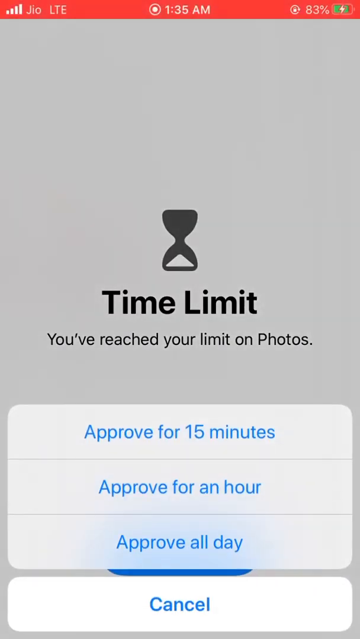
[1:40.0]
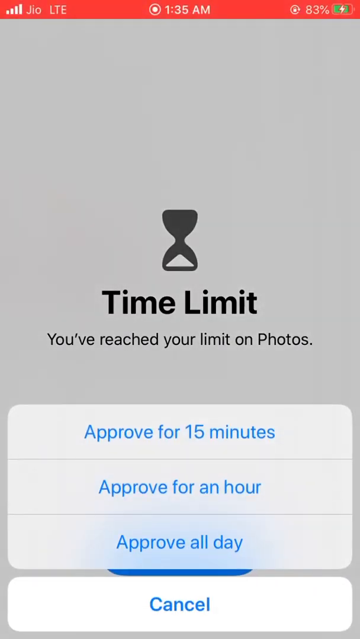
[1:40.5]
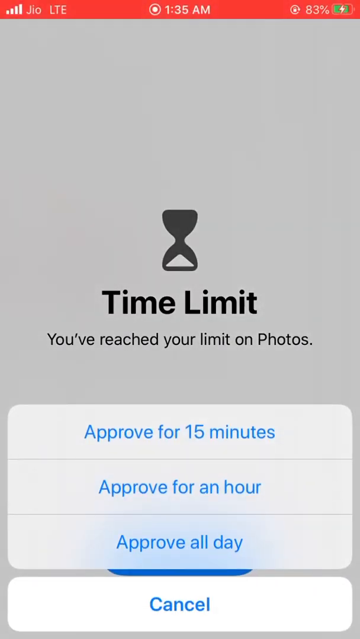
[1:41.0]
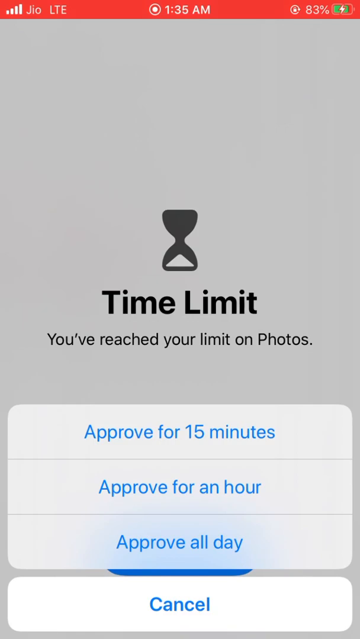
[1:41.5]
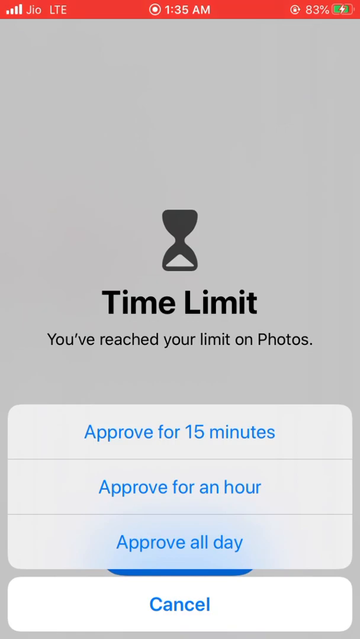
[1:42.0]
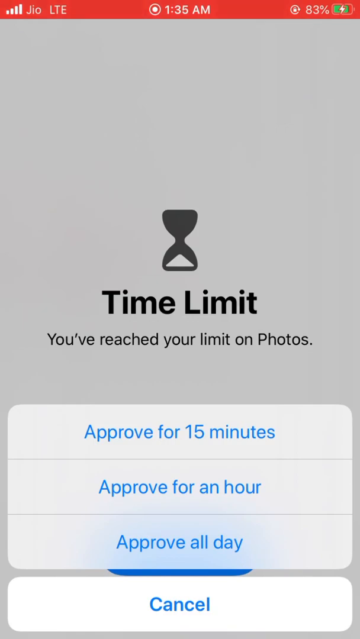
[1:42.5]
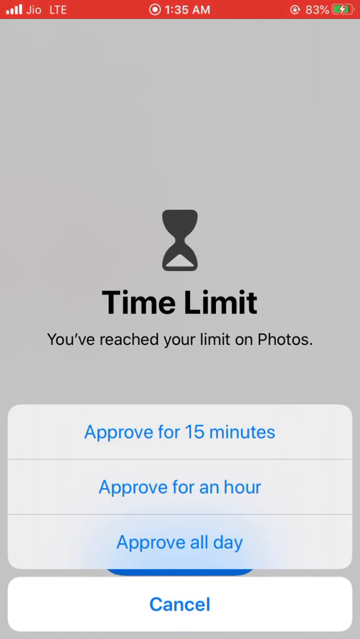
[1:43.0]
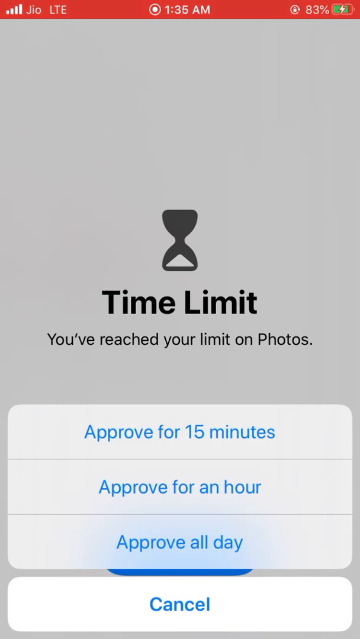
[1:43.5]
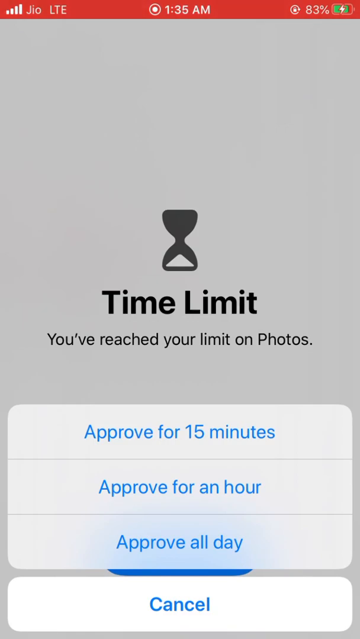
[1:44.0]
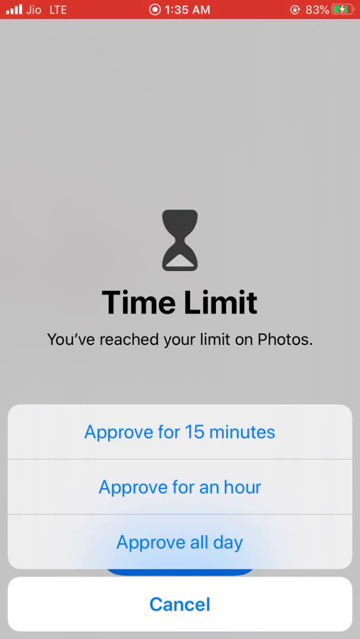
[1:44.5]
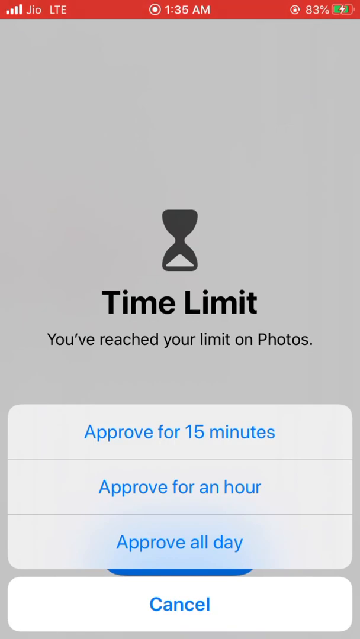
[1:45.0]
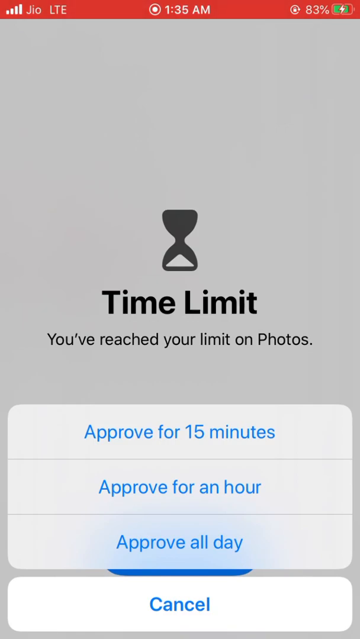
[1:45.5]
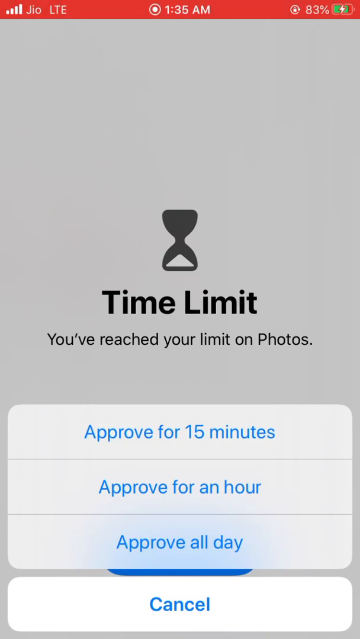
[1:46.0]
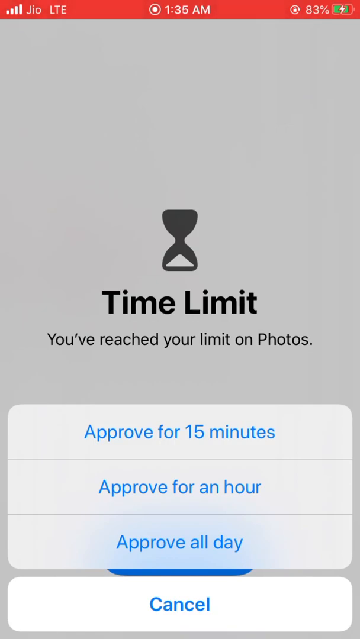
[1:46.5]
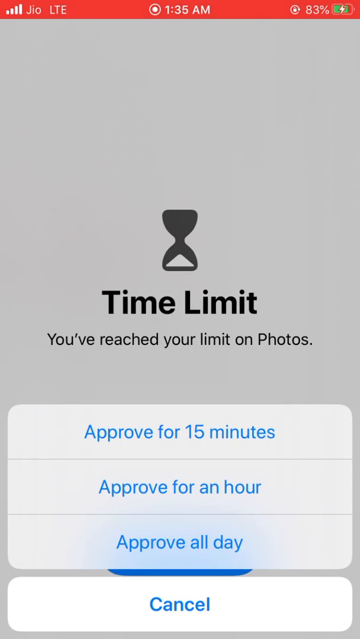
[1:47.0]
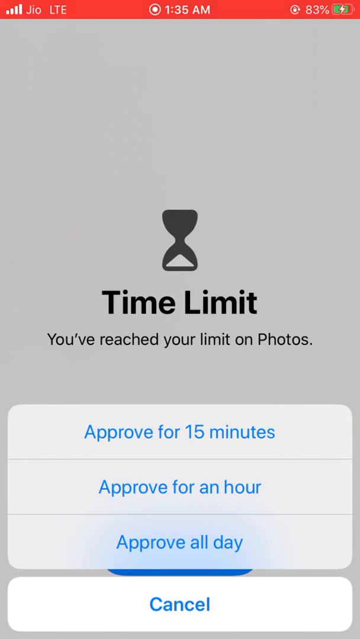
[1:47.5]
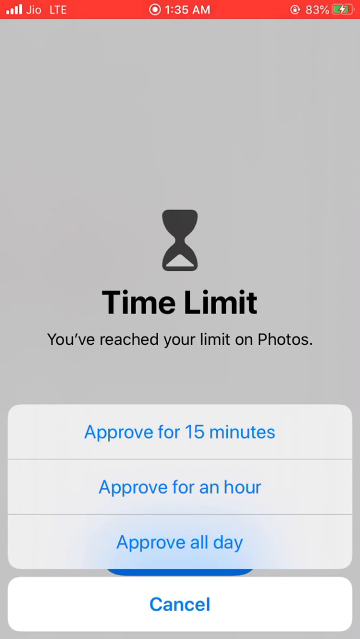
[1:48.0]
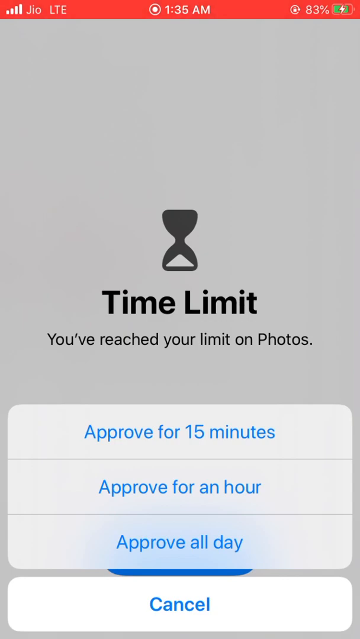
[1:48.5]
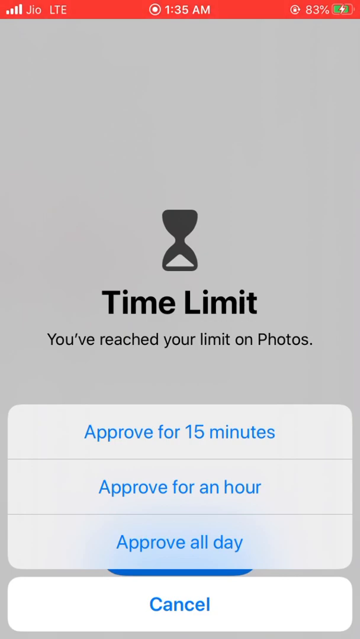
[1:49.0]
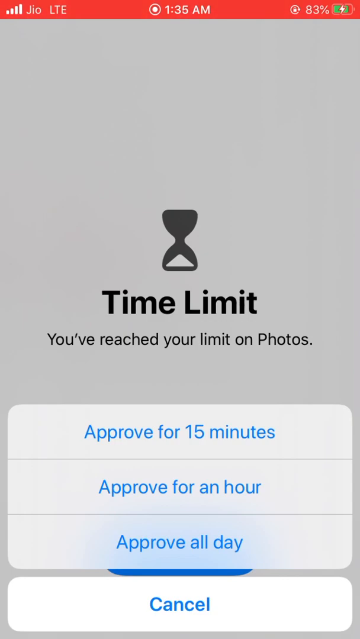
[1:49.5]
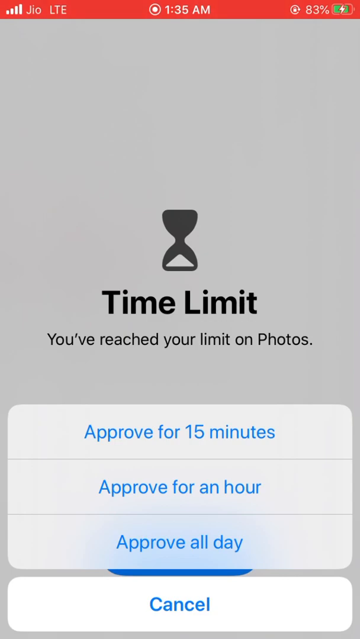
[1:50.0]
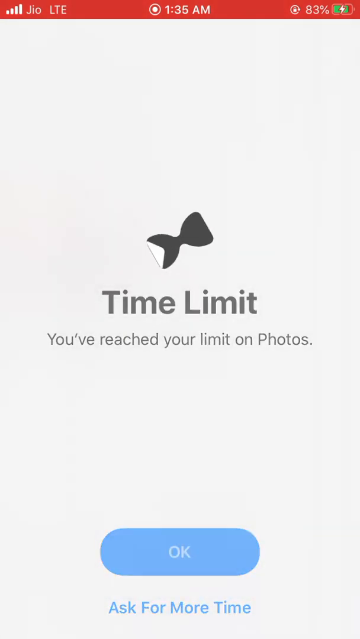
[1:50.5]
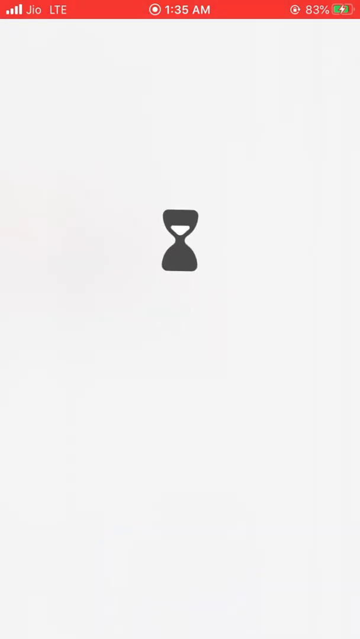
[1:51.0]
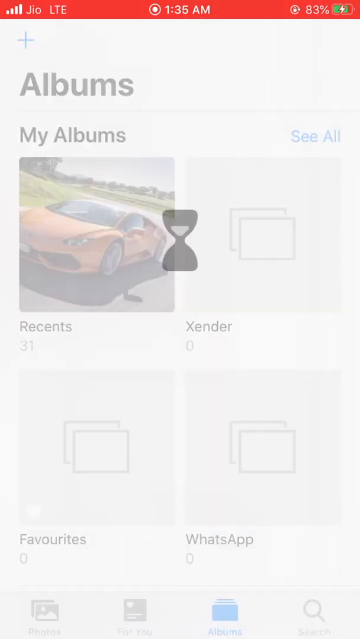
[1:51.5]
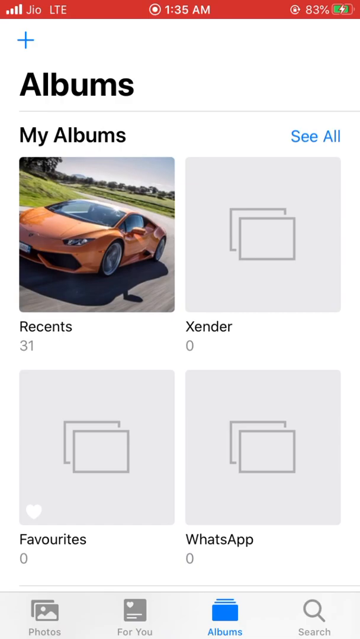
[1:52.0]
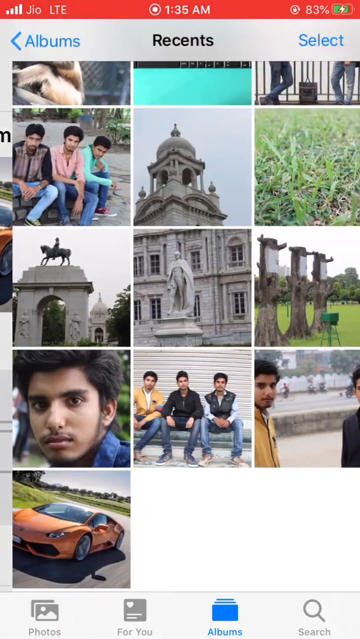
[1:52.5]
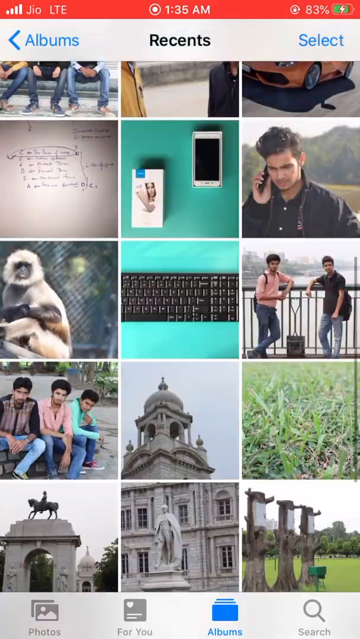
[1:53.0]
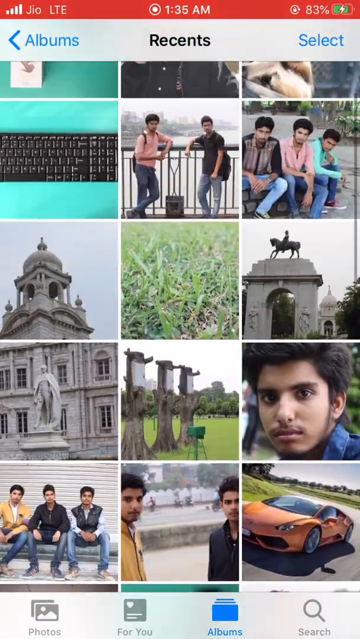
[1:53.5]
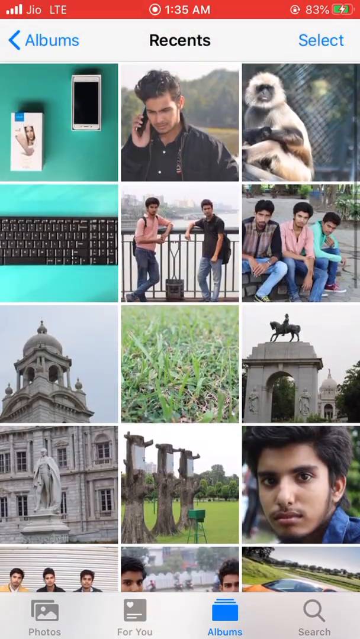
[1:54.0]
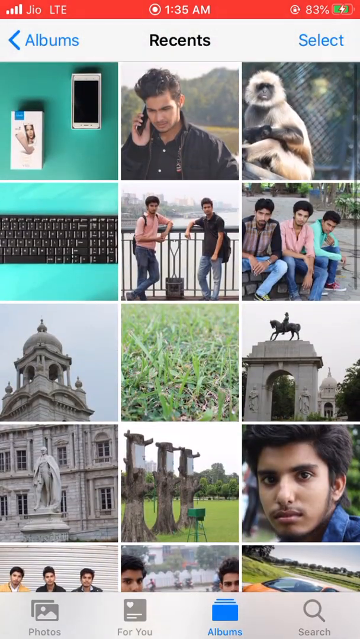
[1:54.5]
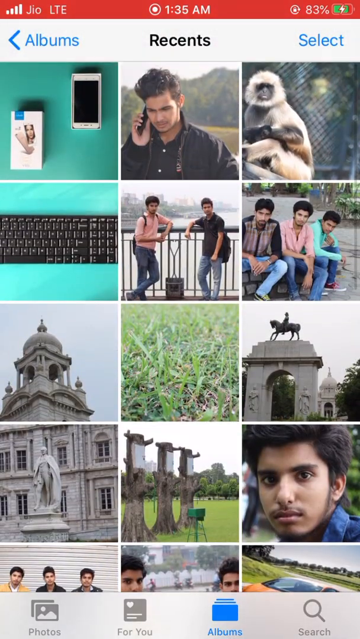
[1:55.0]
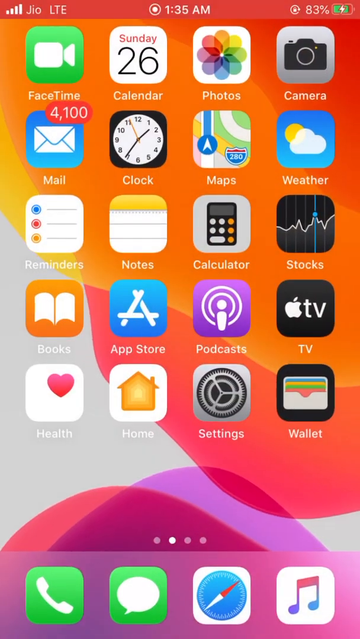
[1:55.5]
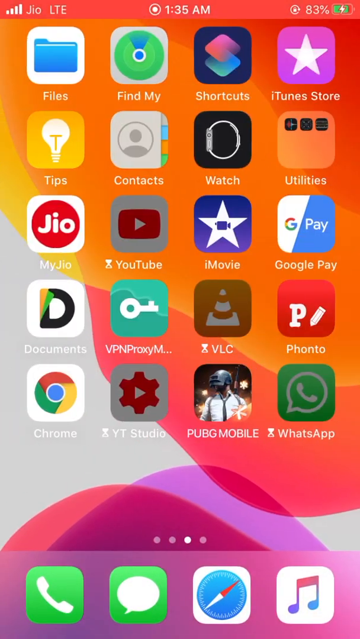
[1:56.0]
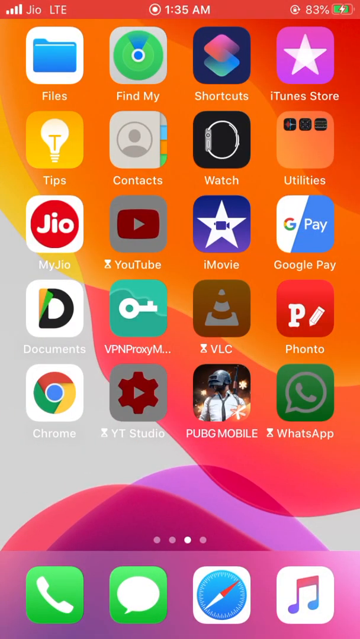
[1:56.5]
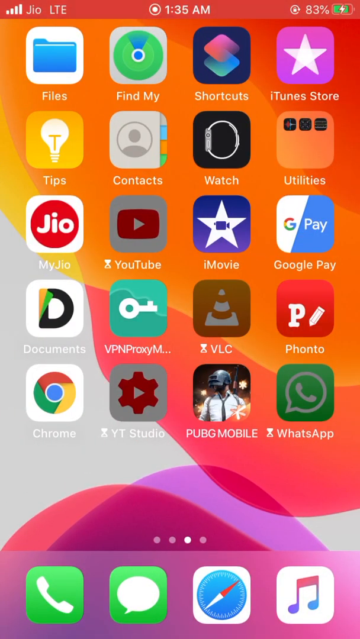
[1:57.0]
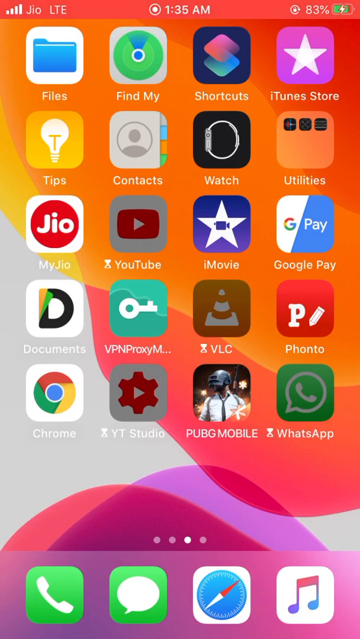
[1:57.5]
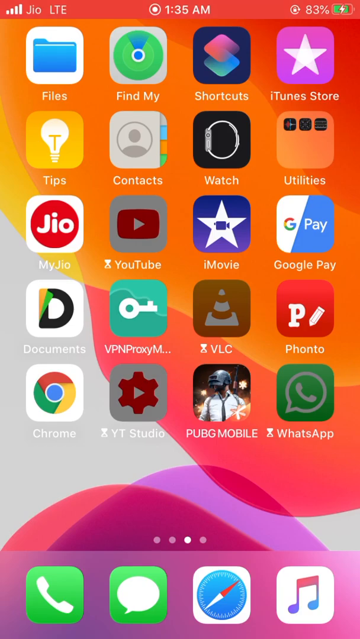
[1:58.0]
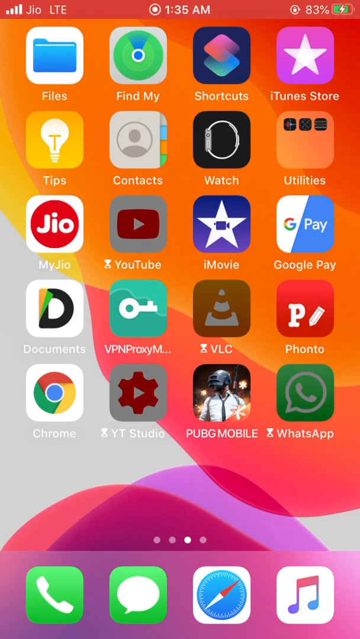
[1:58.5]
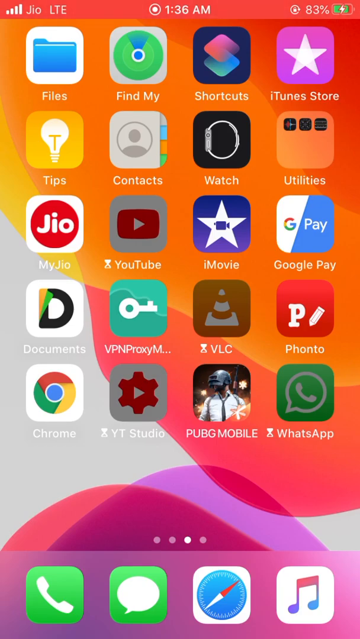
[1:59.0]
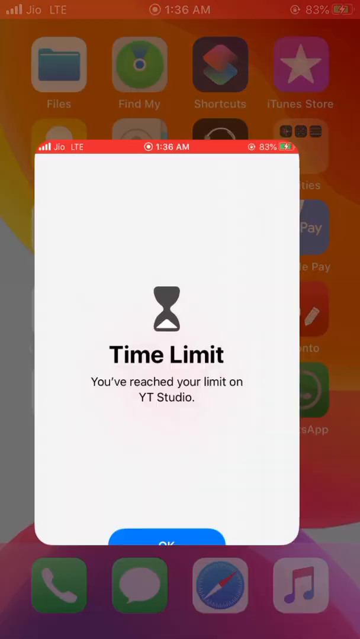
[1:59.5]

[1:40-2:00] After the screen code is entered, the user can approve different amounts of time. There are three options: approve for 15 minutes at the top, approve for an hour next, and last an option to approve for all day, with an option to cancel below them. The user approves, but which option is selected happens too quickly to see. A small spinning hourglass symbol appears, now with the sand at the top. The Photos albums appear, with the recent photos album showing a picture of an orange sports car. Opening the recent photos reveals a set of pictures of the user posing, a picture of some European cathedral or location, pictures of hanging out with friends, and some apps and possibly homework. The user goes back to the home screen and scrolls over to the YouTube apps.